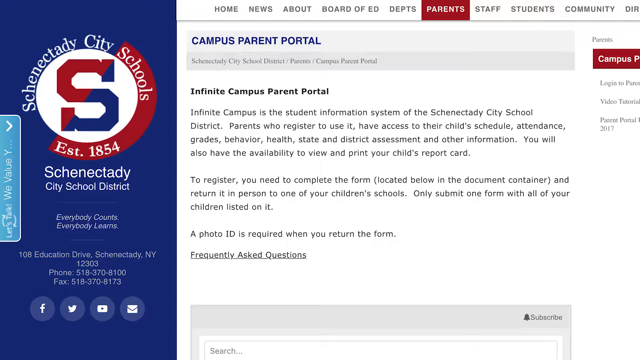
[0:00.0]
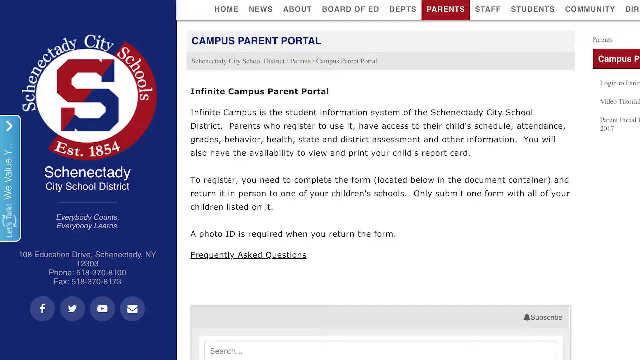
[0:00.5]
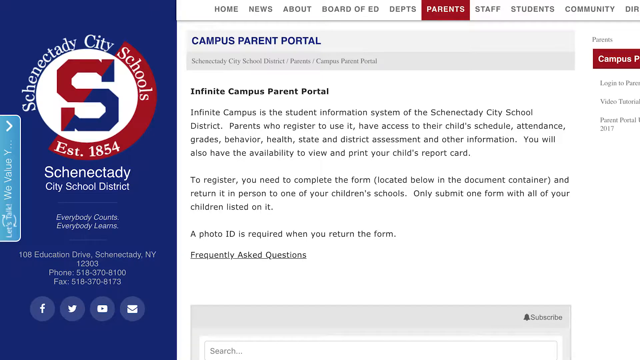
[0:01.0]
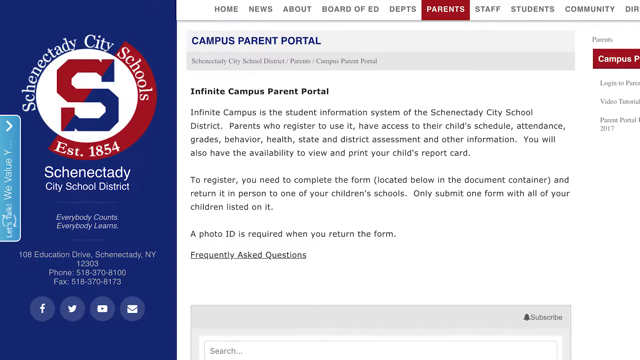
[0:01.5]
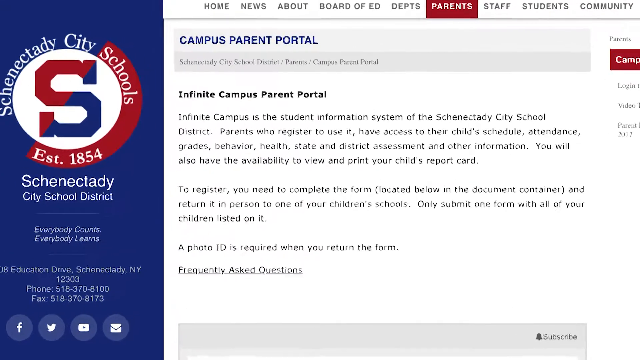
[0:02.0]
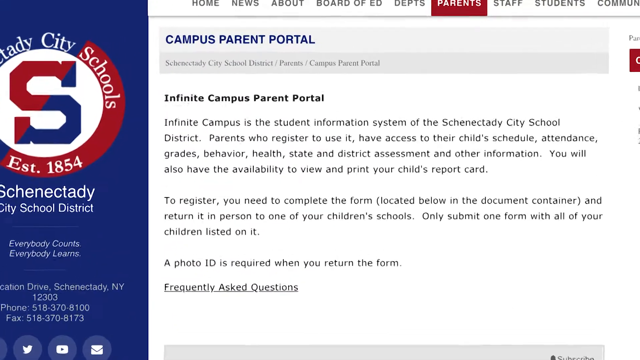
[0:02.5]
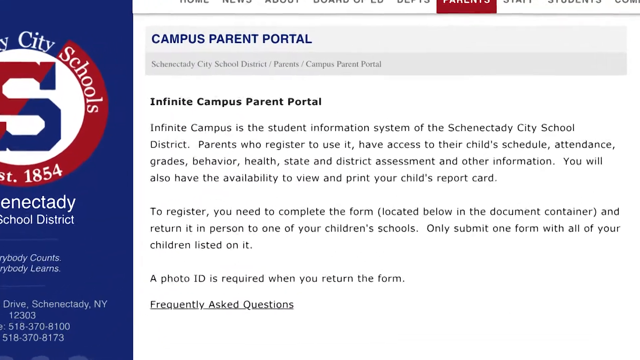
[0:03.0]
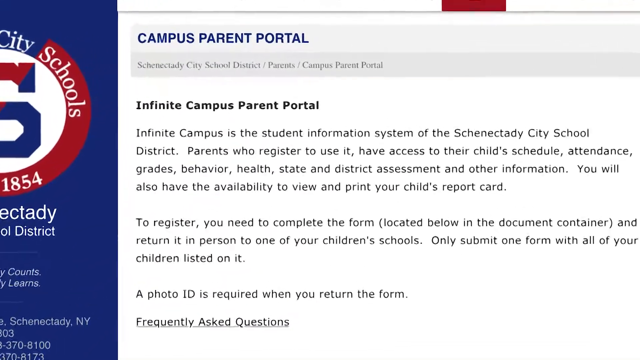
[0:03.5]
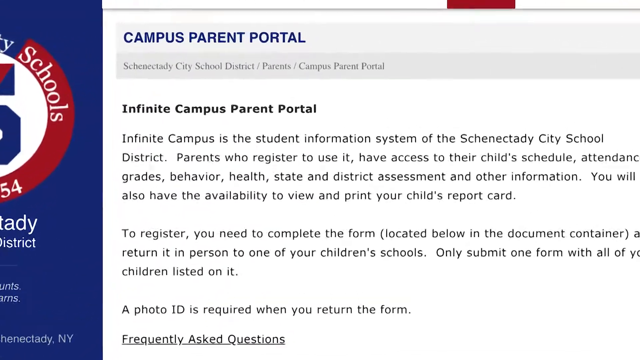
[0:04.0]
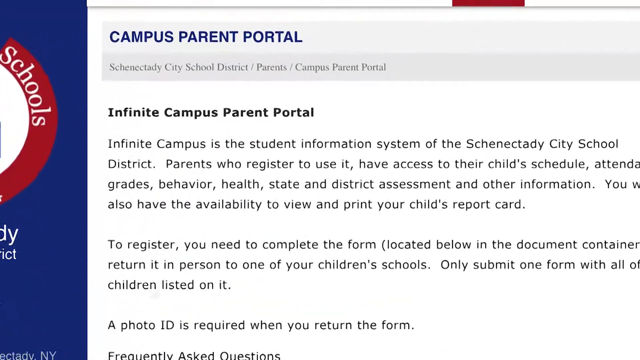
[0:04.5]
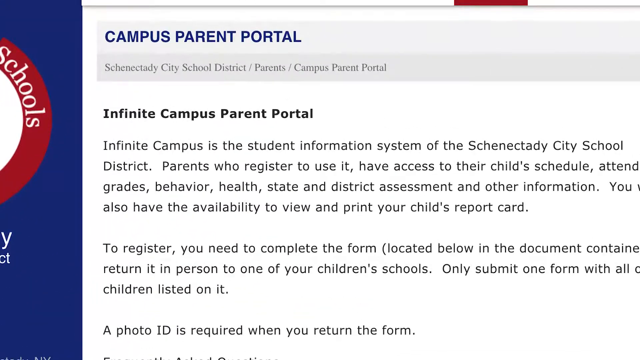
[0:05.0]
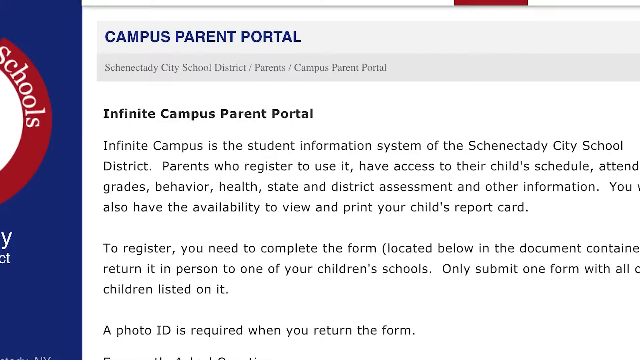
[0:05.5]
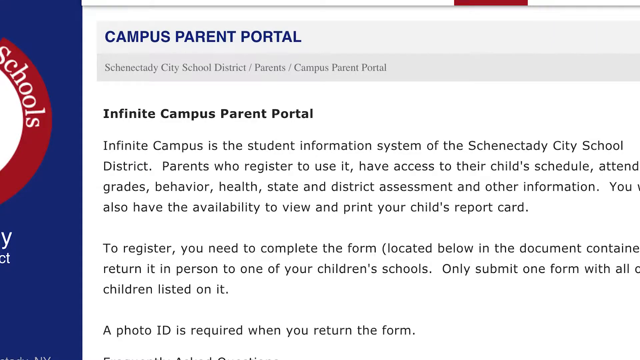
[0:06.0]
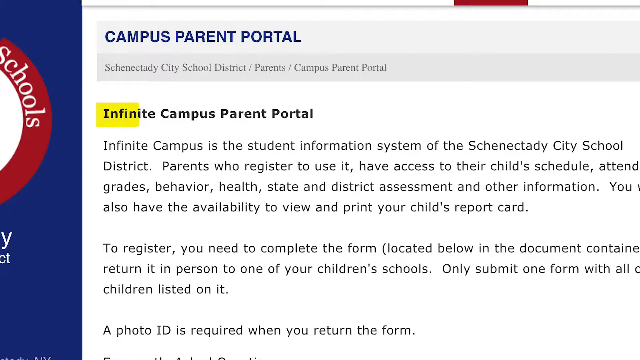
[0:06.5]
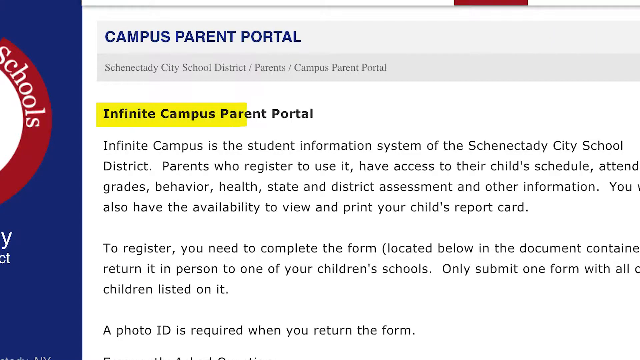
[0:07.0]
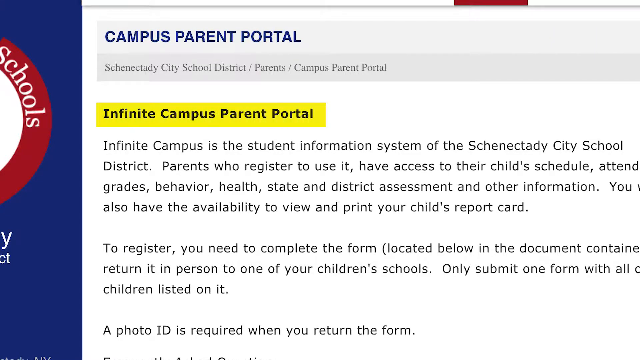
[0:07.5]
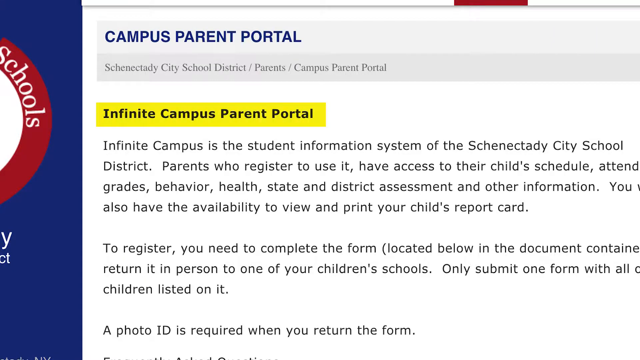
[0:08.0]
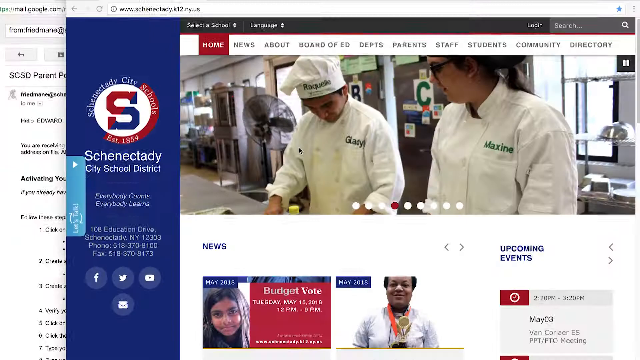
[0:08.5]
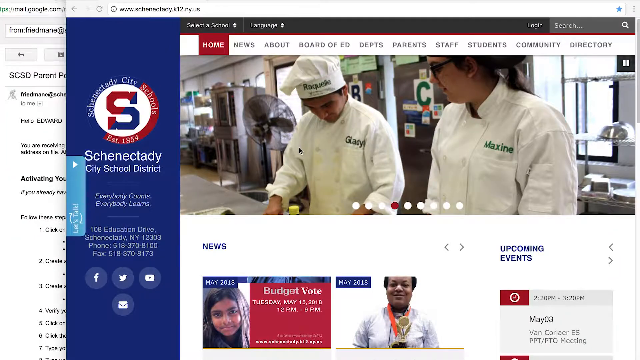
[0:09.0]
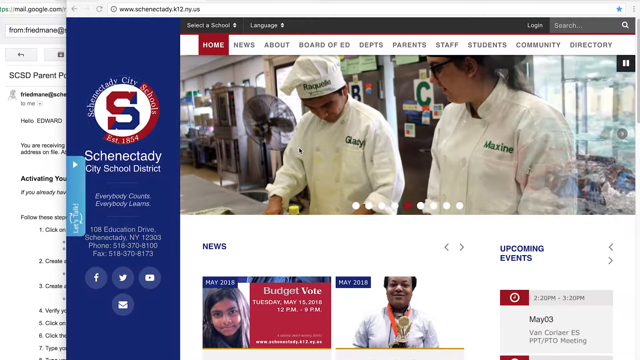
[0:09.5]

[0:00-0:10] A web page is shown. The left side of the screen is blue, running down the screen, and the right side is white. At the top of the white half is a menu reading, from left to right, "Home," "news," "about," "board of ed," "departments," "parents," "staff," "students" and "communities," with another item cut off at the edge of the screen. "Parents" is highlighted in red. At the top of the blue section on the left is a logo: a white circle containing an S that is red on the upper left half and blue on the bottom right. Around it is the text "SHENECTADY City Schools," and below it "EST. 1845." There is writing in the white part of the screen, and the view zooms in on it. It reads "infinite campus parent portal," and "infinite campus parent portal" is highlighted in yellow. The view then switches to another page.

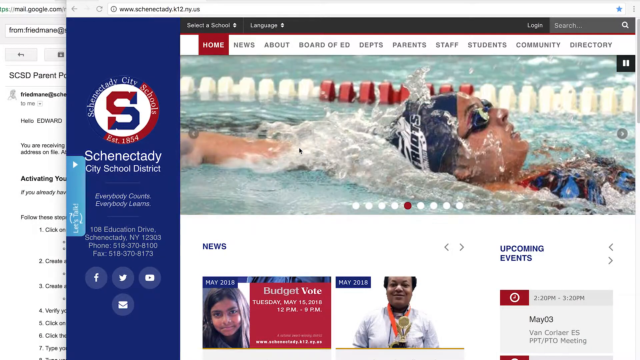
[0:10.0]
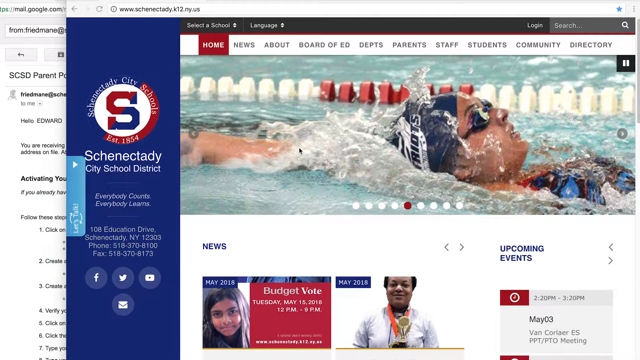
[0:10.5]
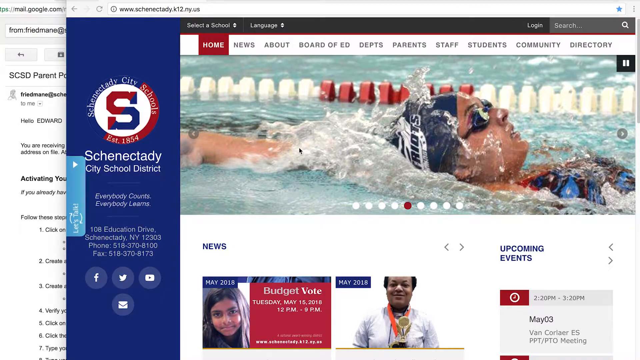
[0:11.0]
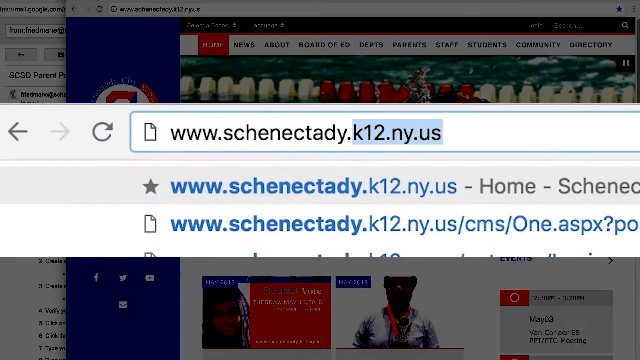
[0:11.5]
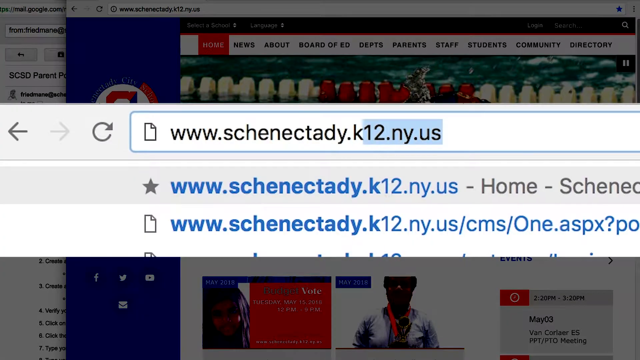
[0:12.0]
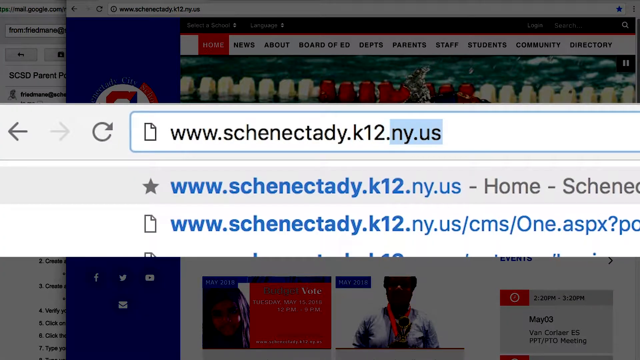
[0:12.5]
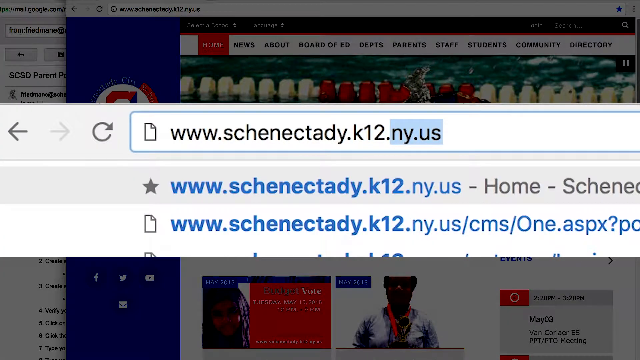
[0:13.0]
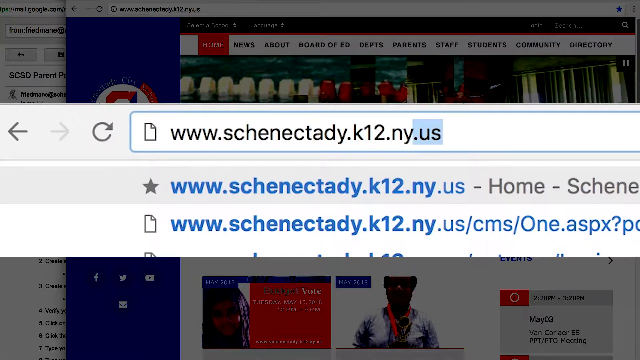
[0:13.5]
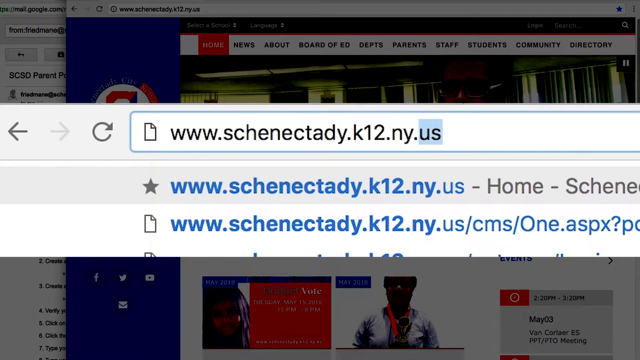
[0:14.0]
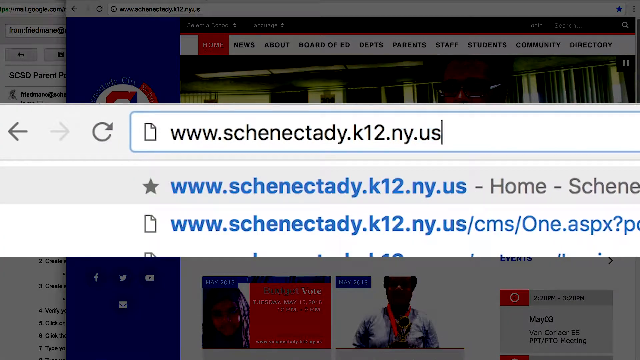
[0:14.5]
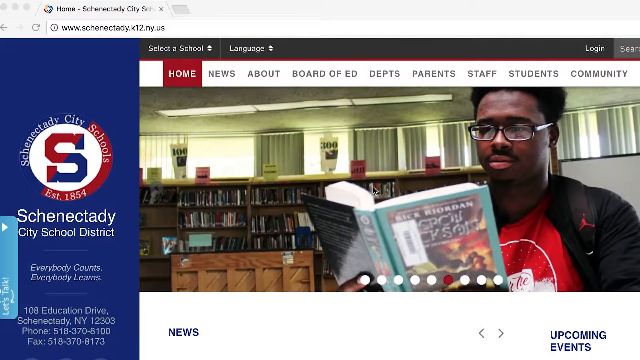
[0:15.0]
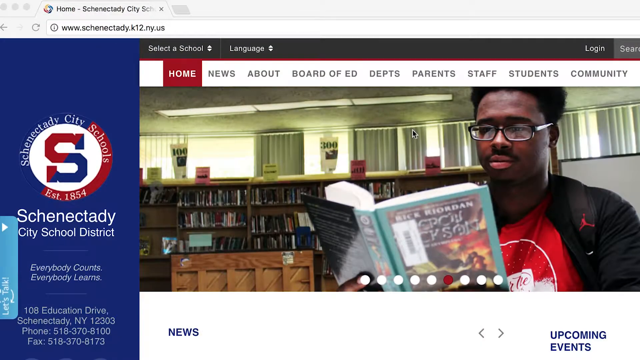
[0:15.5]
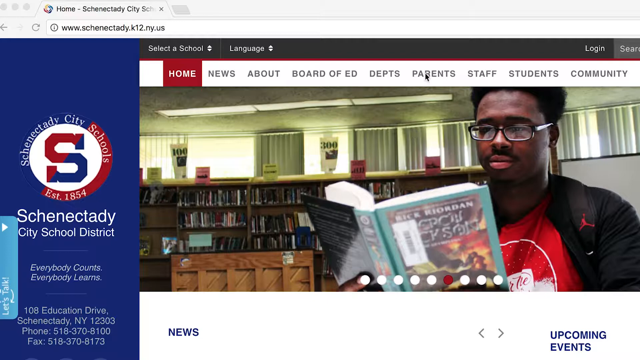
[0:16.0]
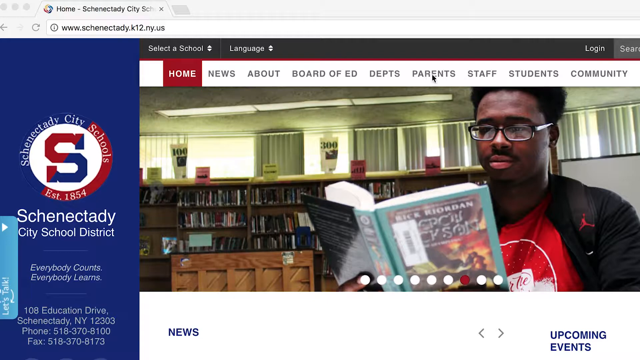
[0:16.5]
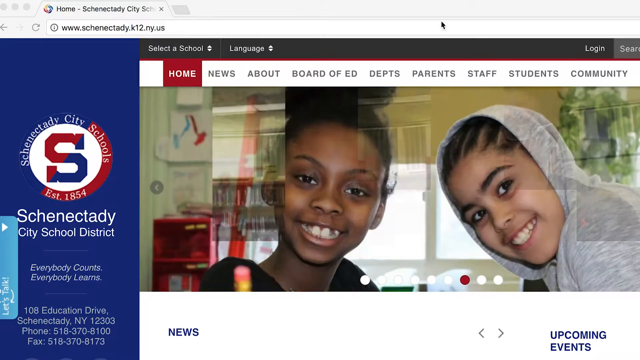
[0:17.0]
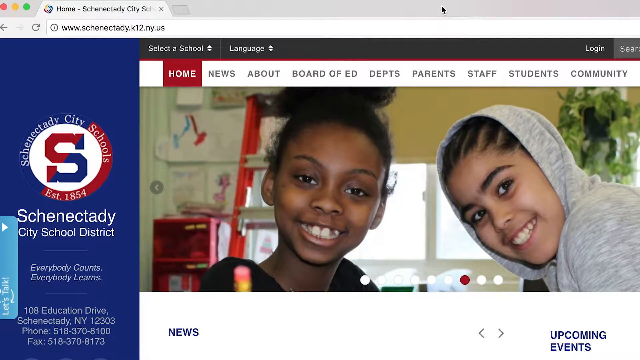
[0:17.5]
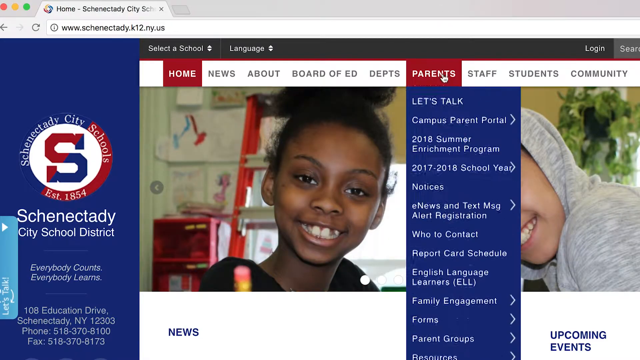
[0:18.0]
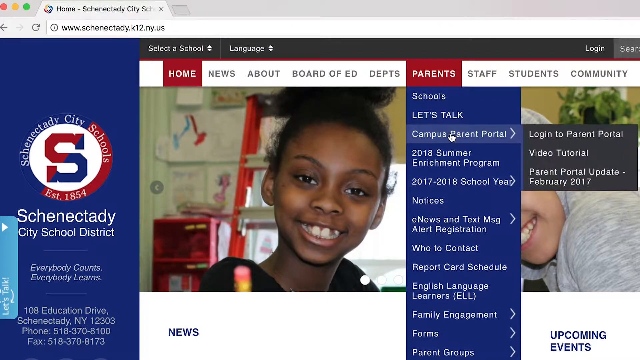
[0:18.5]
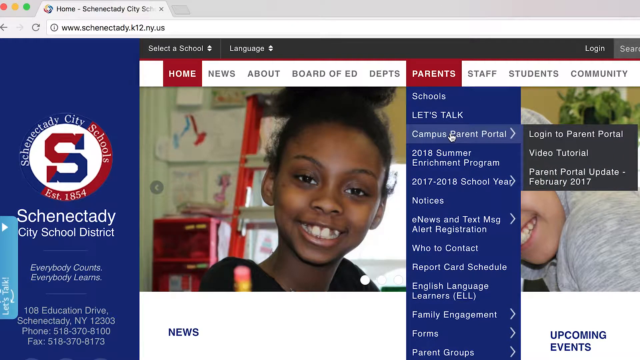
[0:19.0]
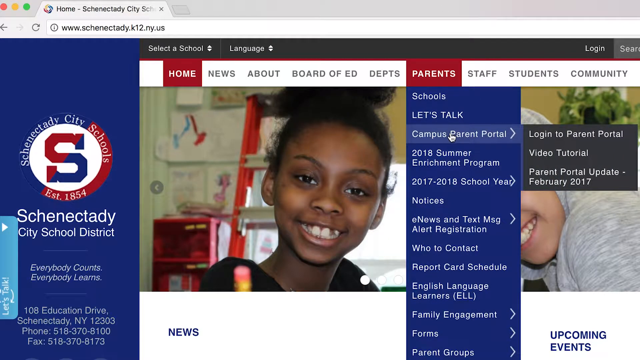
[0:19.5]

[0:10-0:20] A web page shows a picture on the right toward the top of the screen: a woman in an Olympic-sized pool with little buoys marking the lanes. She is on her back, possibly doing a backstroke, with her head and chest sticking out of the water. Below that is a picture of a woman, and to the right of that picture is maybe a doctor. Between the woman and the doctor the text reads "budget boat," and below that "Tuesday, May 15th, 2018, 12 PM to 9 PM." To the right of the doctor is "May 3rd," with "upcoming events" above it. On the left side of the screen, below the logo at the bottom, are a Facebook logo, a Twitter logo, a YouTube logo and a Mail logo.